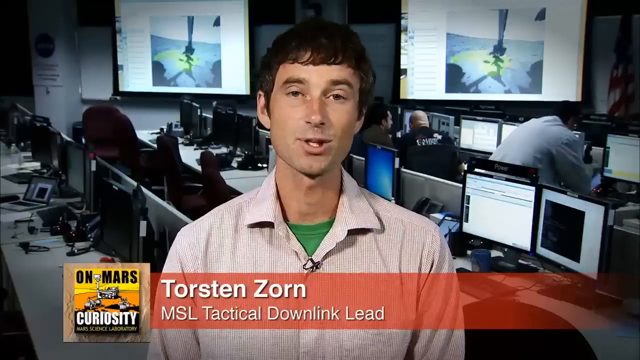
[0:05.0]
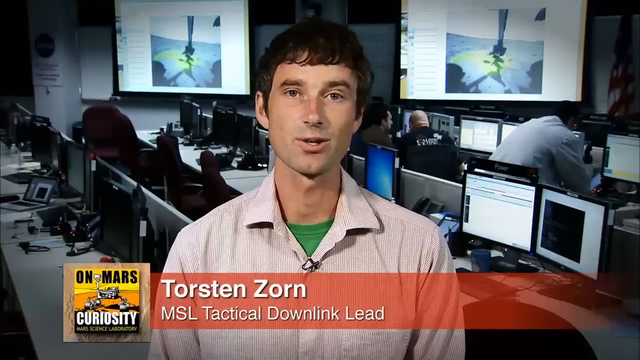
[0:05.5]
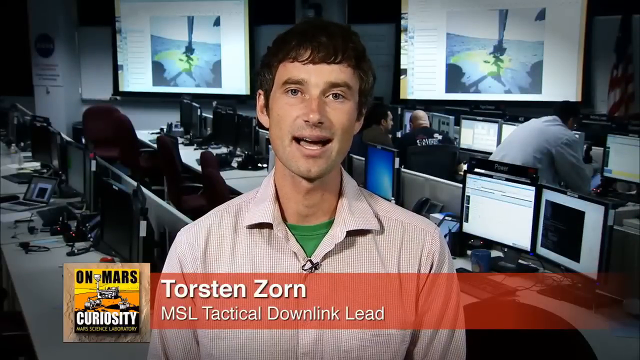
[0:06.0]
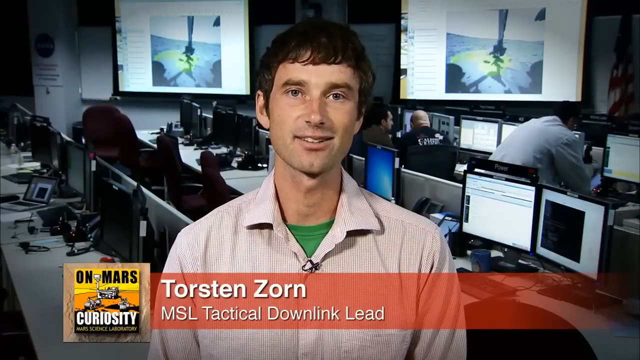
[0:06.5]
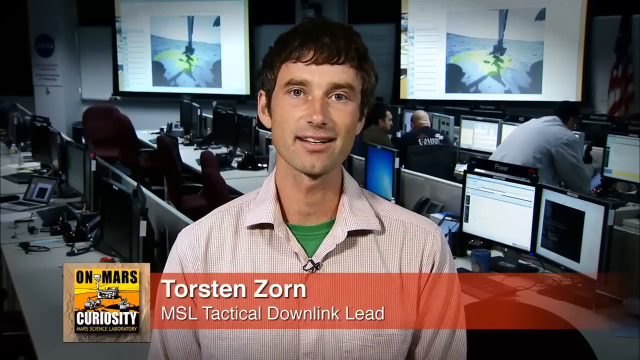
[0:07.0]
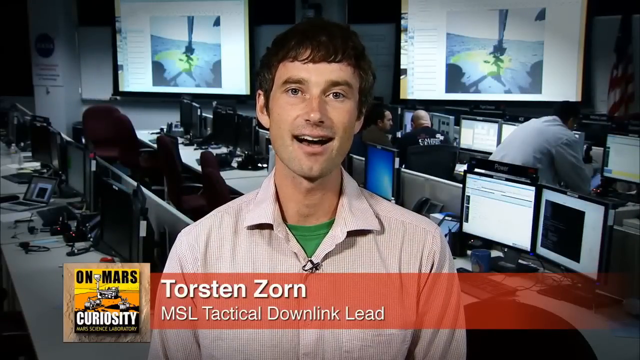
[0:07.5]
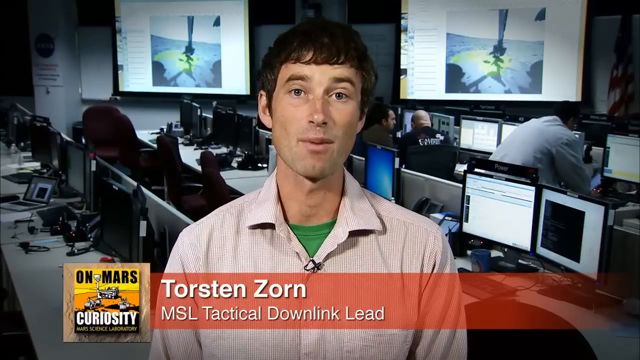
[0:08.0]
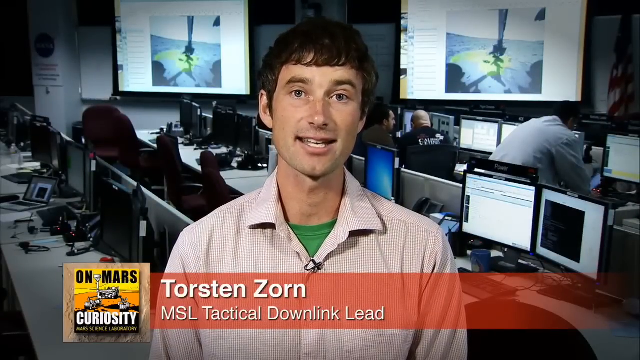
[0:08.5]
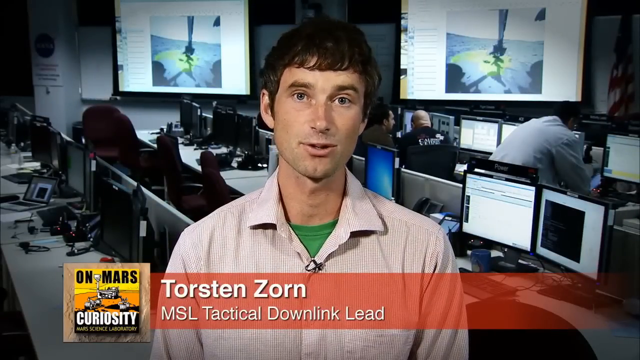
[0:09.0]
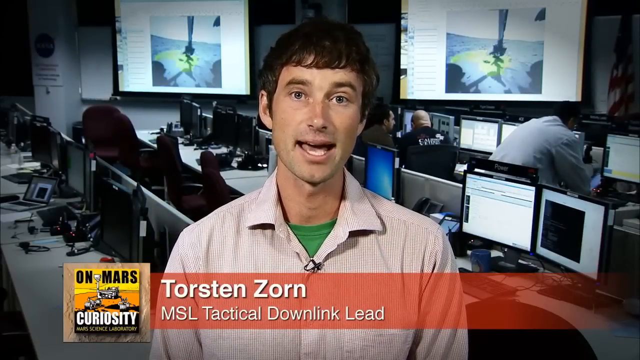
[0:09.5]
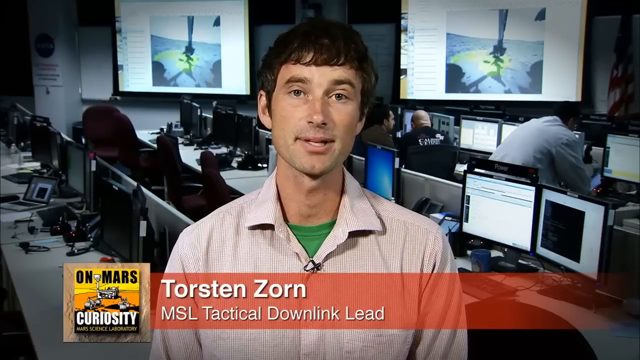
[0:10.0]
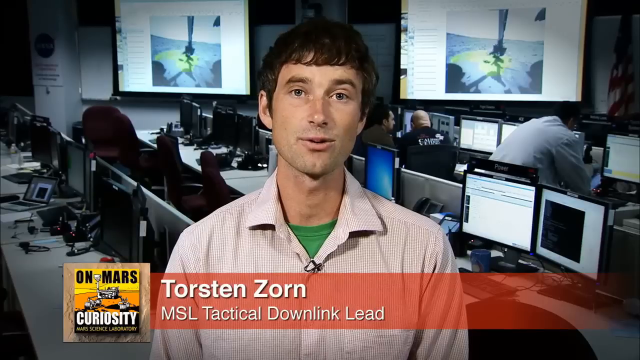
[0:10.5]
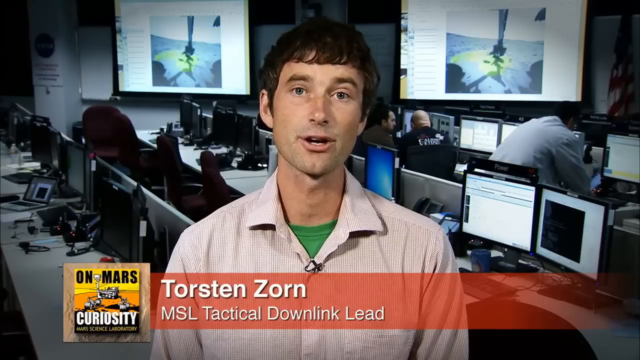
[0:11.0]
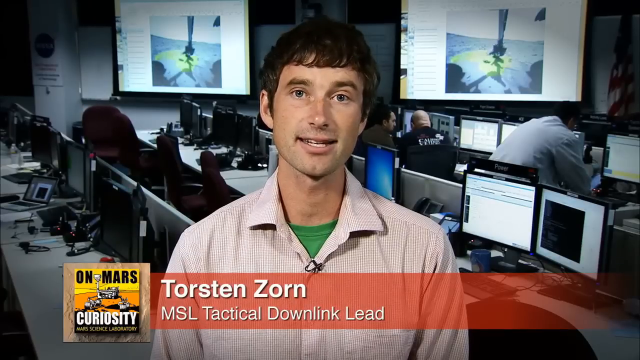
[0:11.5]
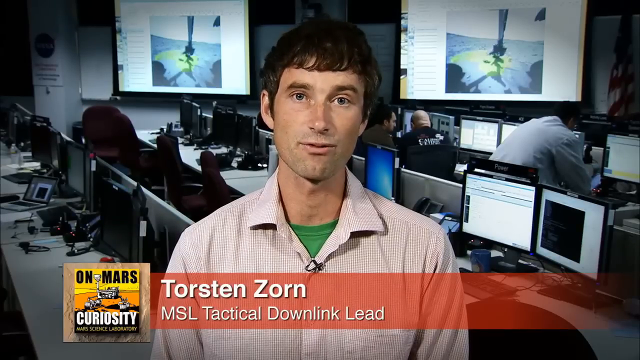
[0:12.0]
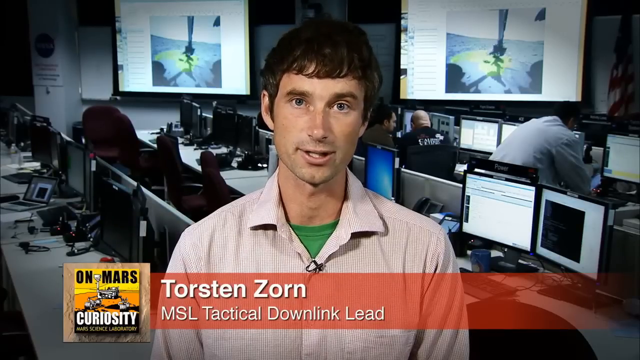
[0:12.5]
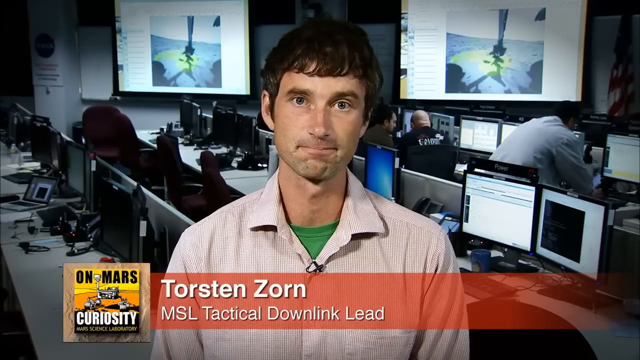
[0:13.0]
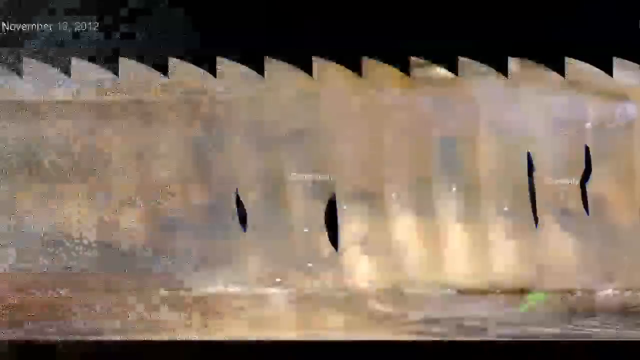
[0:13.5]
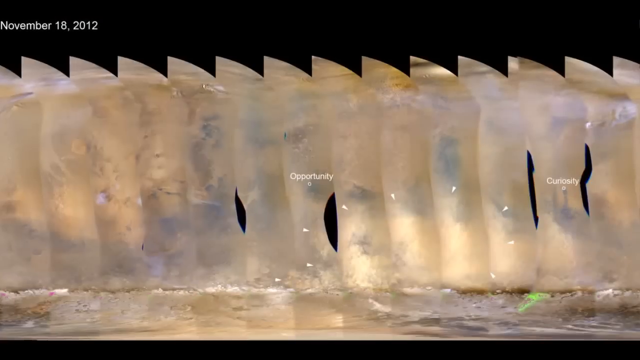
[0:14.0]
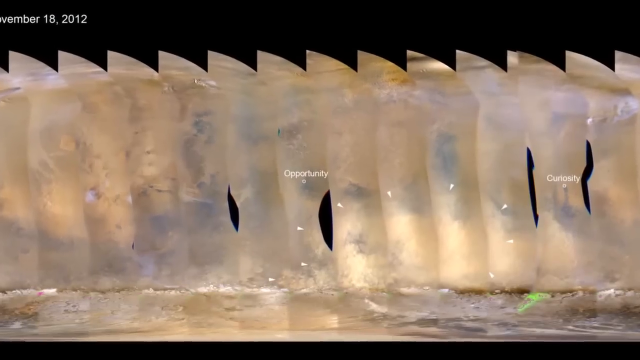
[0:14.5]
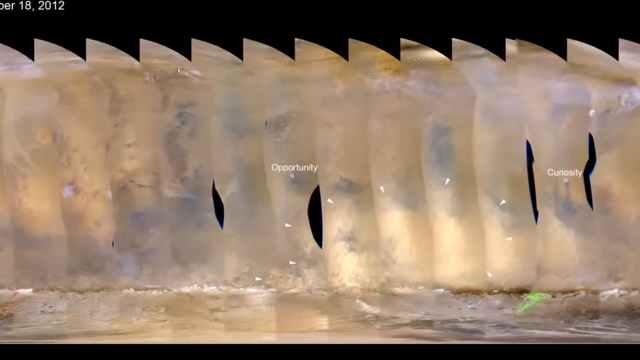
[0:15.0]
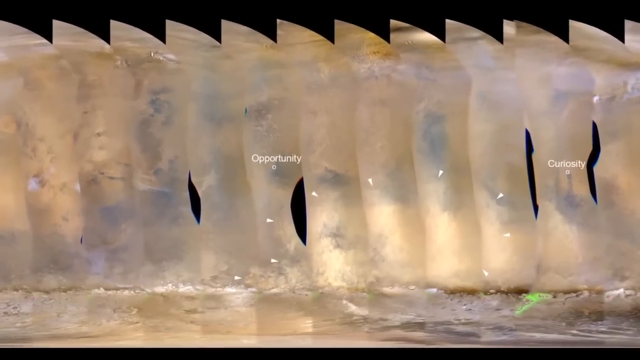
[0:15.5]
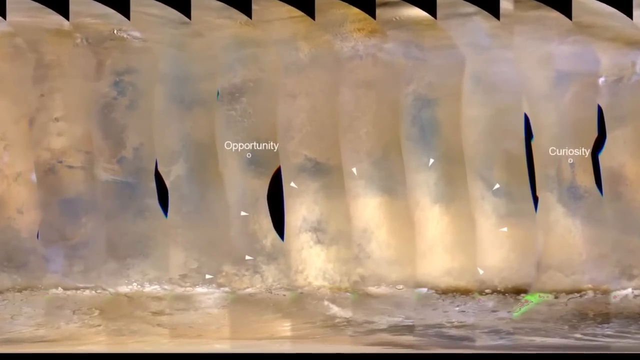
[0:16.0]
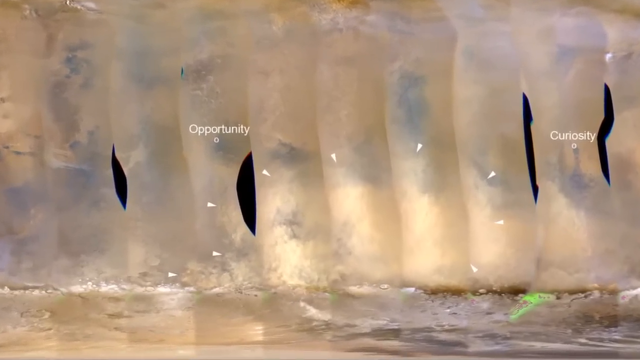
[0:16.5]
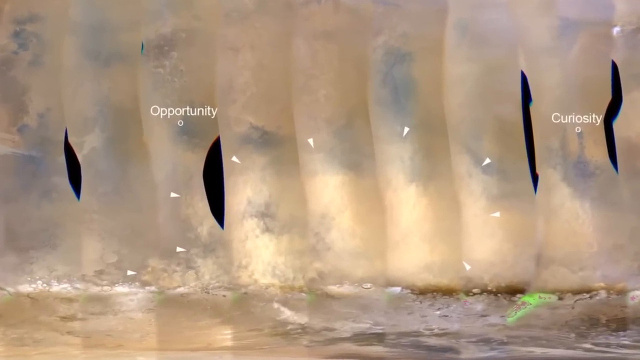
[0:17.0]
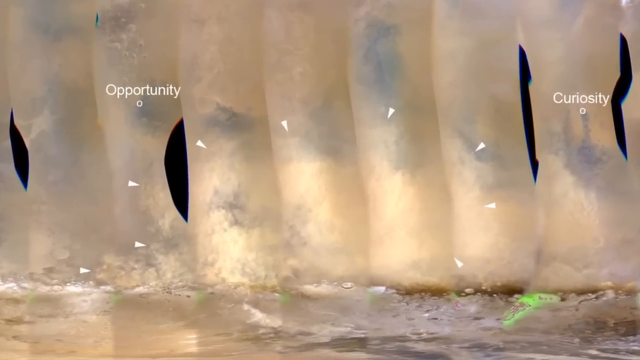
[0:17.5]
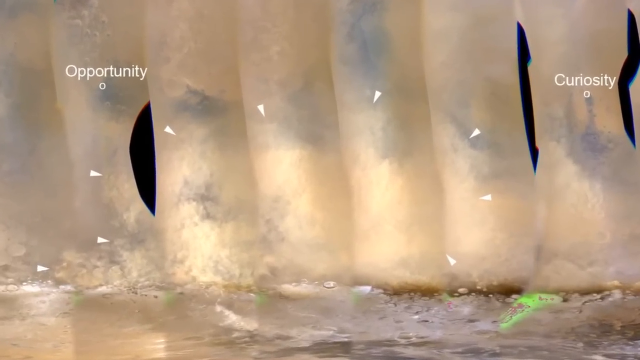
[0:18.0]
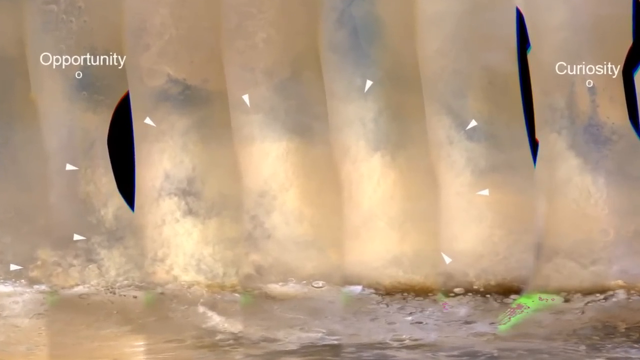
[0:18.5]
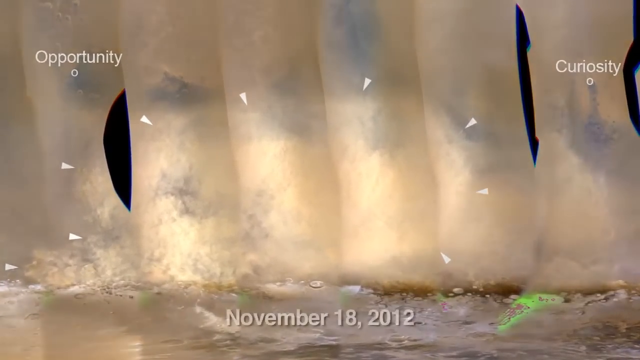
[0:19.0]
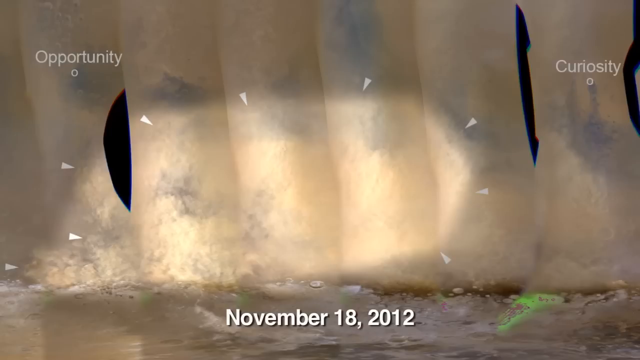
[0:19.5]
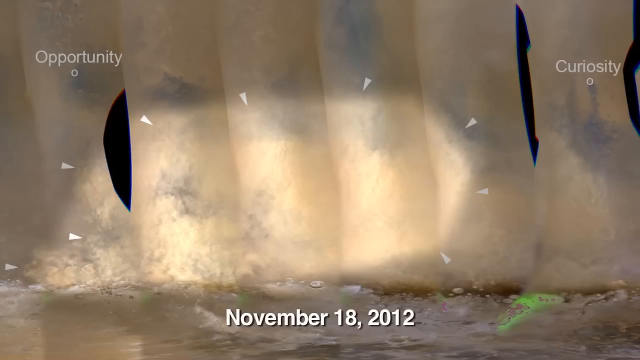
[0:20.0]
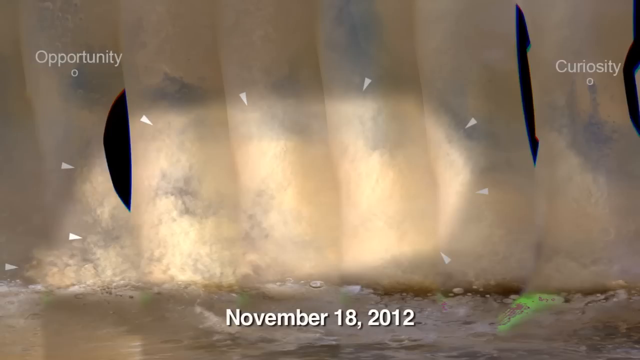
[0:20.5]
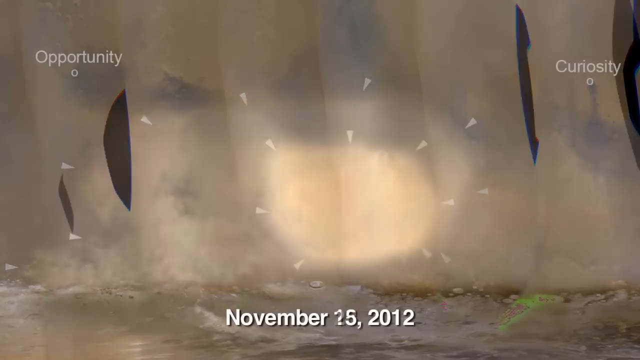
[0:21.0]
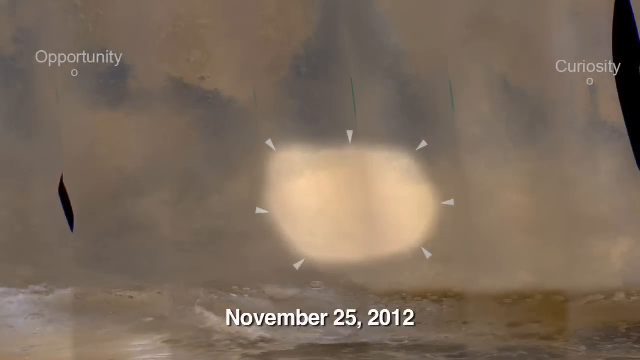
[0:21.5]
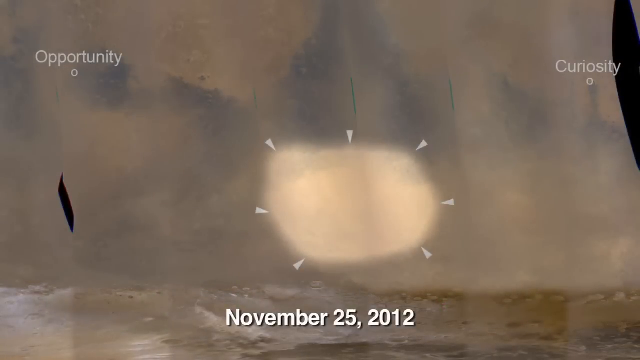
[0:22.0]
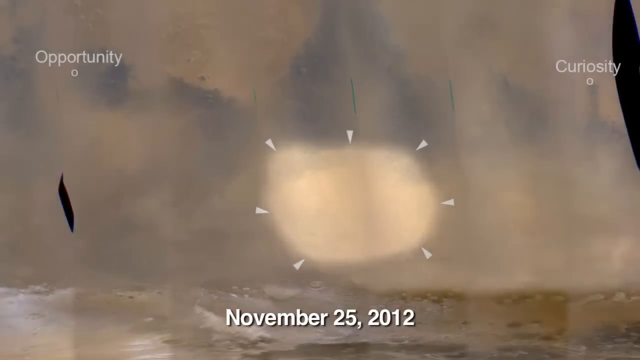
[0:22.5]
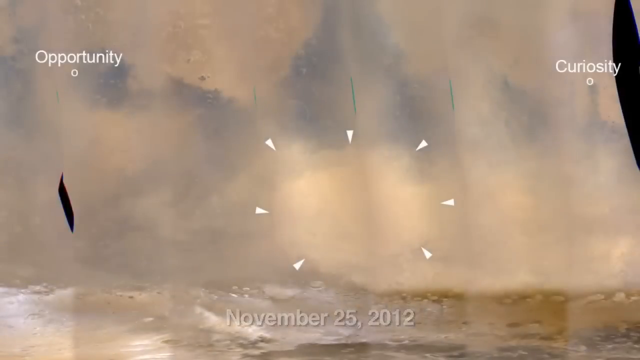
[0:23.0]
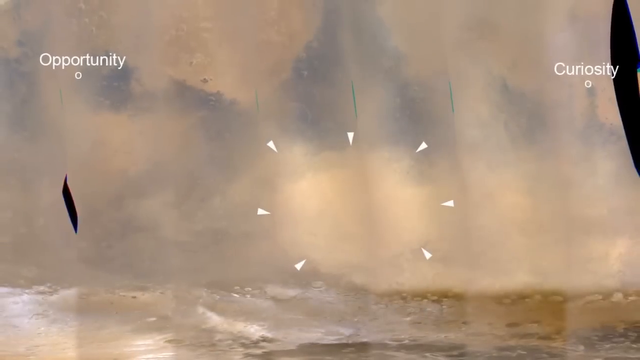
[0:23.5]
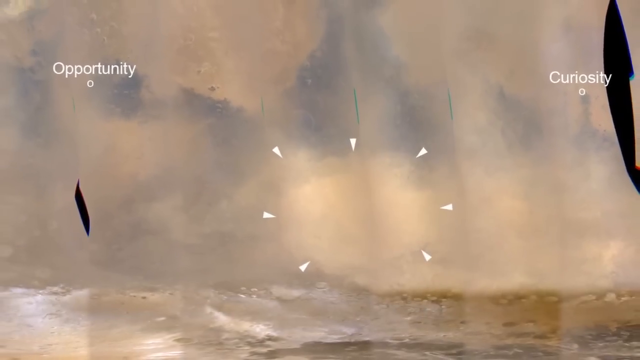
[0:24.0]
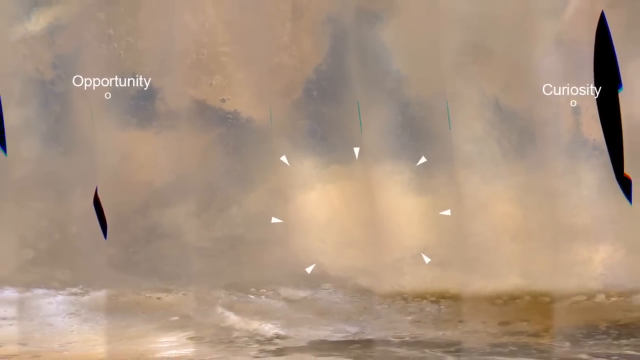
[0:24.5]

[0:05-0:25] A man facing the camera talks in a computer control center. A close-up shows an image with Curiosity and Opportunity, possibly an image of Mars, with a particular area highlighted that looks like a cloud or white background. The video cuts back to the control center, then zooms in again on the cloud-like area of the diagram, with triangles added to highlight it. Torsten Zorn is talking; his title is MSL Tactical. The view returns to Opportunity and Curiosity with a particular area of the sort of modeled, cloudy diagram highlighted. The video goes back and forth between the person talking and the diagram, which is labeled November 18th and then November 25th, 2012, possibly showing a difference over time. The two dates, the 18th and 25th of November, are highlighted again. A number of computer screens are behind Torsten as he talks. The view zooms in on the highlighted area from November 18th, then a smaller highlighted area on November 25th. In the control center, some people behind the main speaker are looking at their computers. The video again zooms in on an area of the map or diagram dated November 18th, 2012 and November 25th, 2012. A Mars Curiosity icon appears. Opportunity and Curiosity are dots on the diagram, and the highlighted area between them changed over a week in November. The video returns to the computer lab.